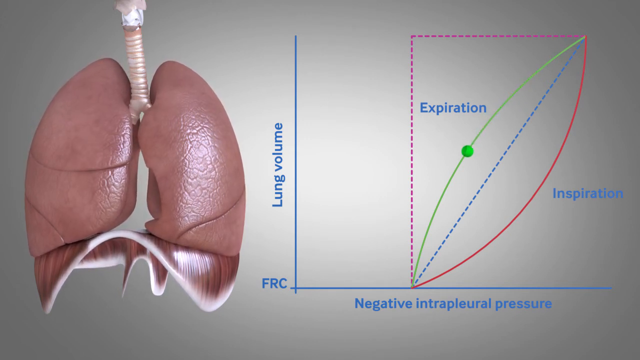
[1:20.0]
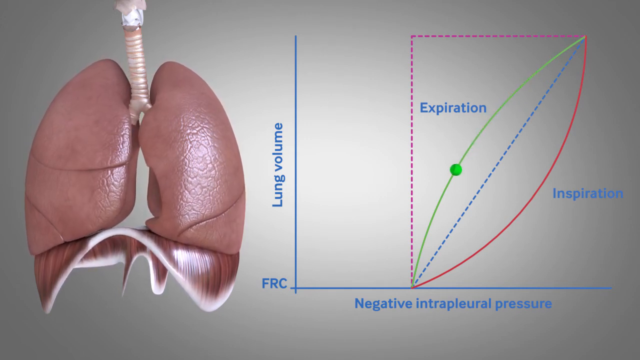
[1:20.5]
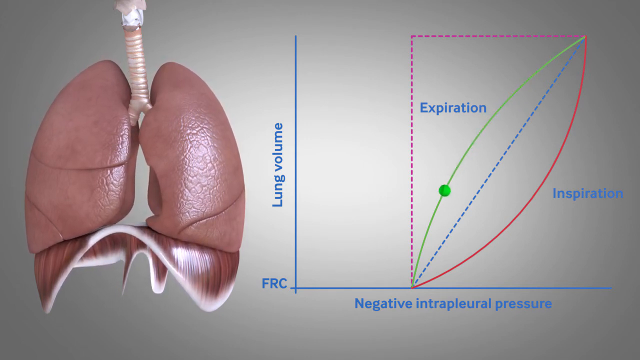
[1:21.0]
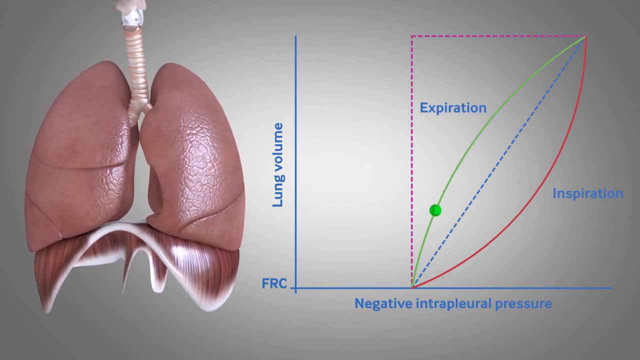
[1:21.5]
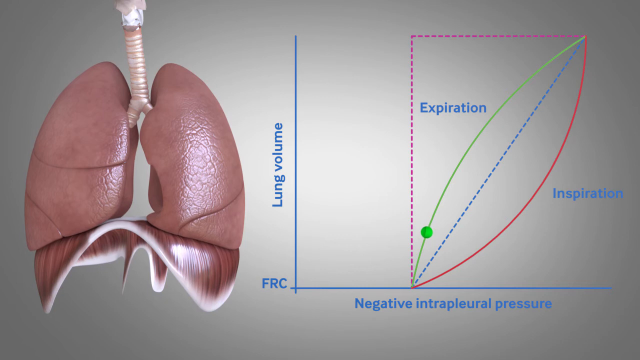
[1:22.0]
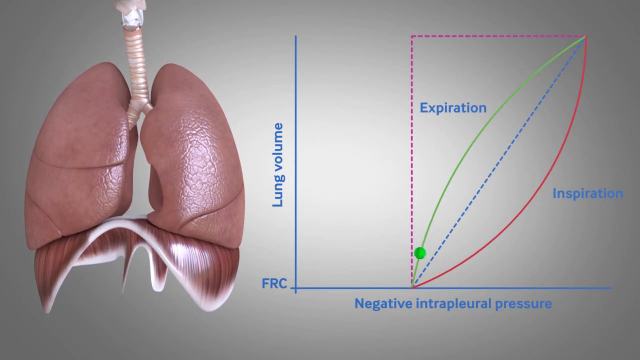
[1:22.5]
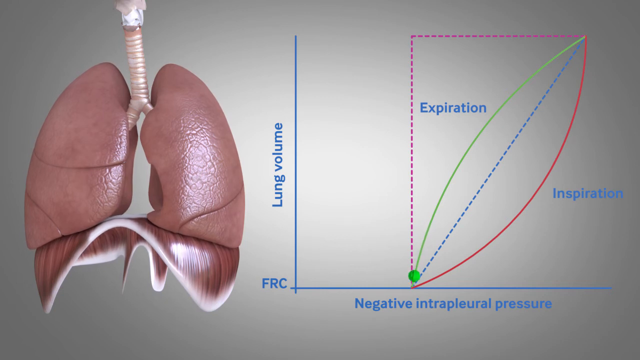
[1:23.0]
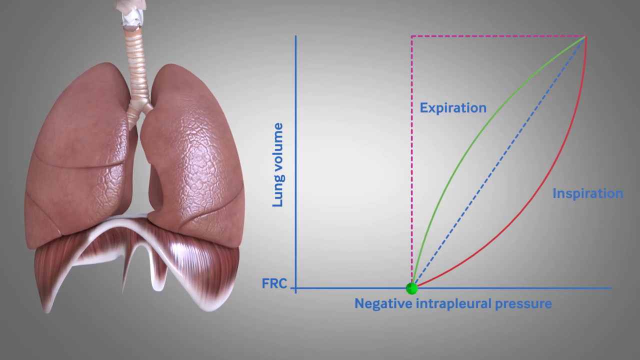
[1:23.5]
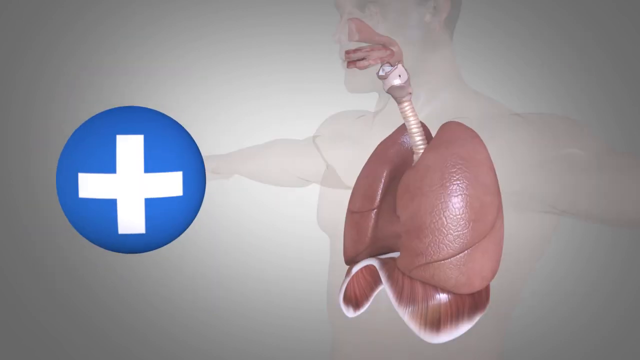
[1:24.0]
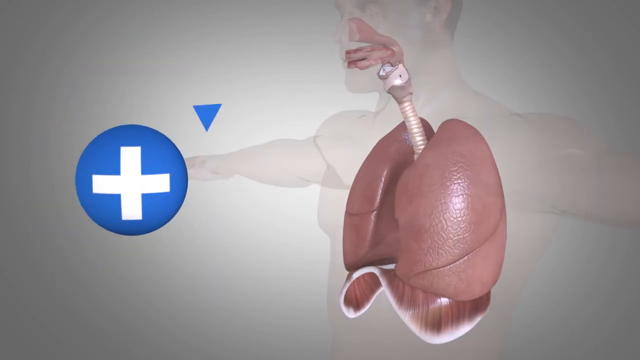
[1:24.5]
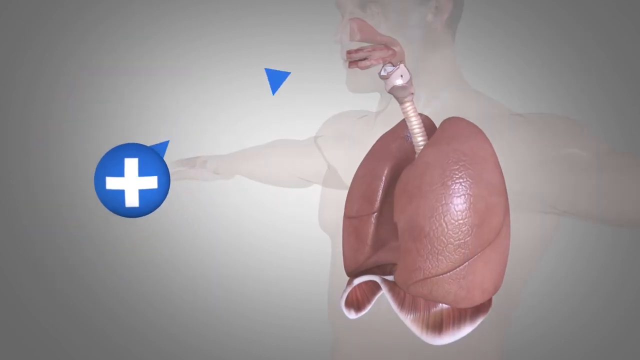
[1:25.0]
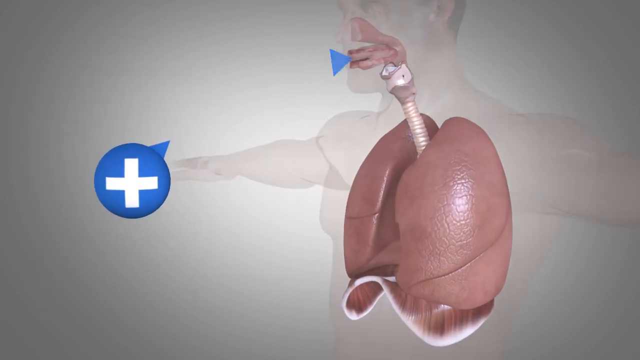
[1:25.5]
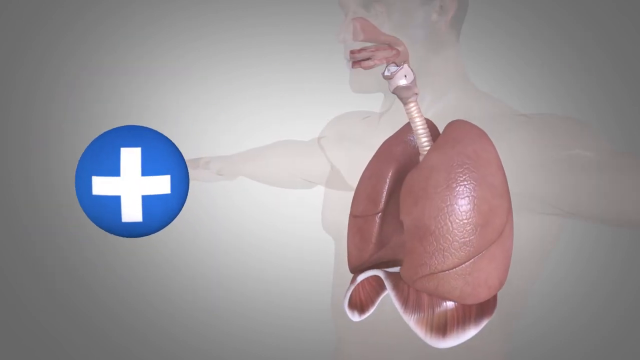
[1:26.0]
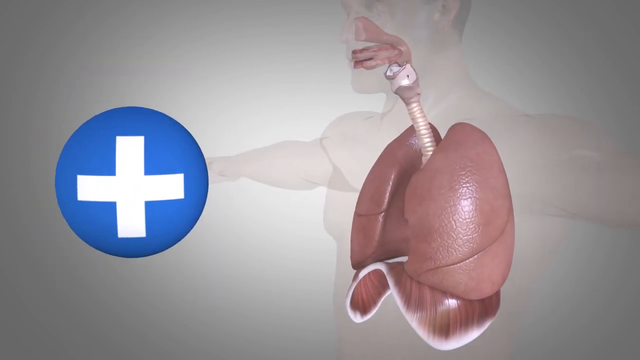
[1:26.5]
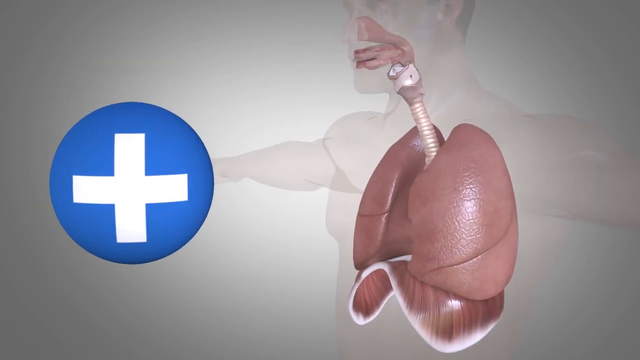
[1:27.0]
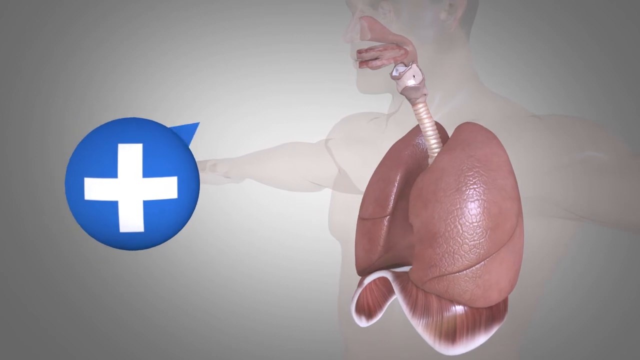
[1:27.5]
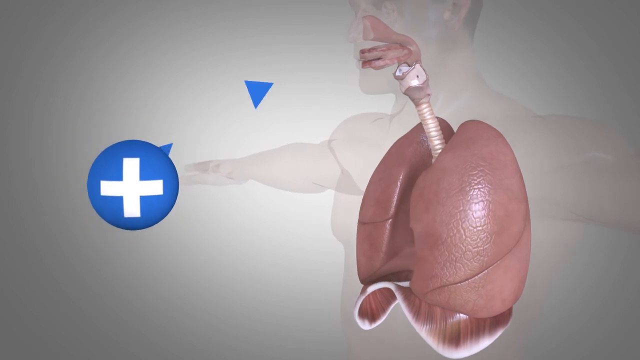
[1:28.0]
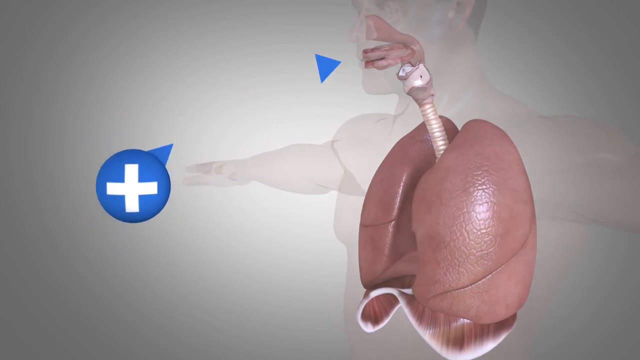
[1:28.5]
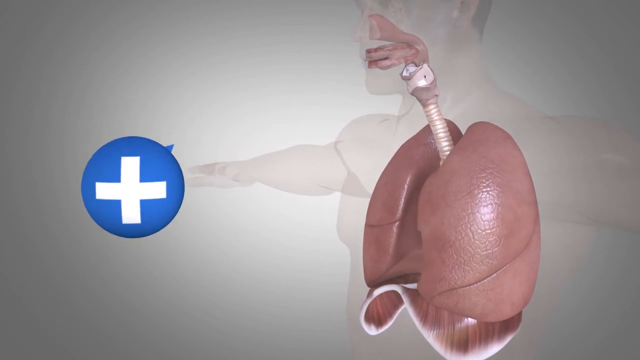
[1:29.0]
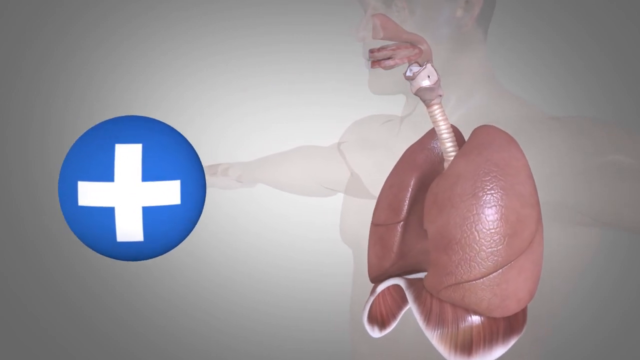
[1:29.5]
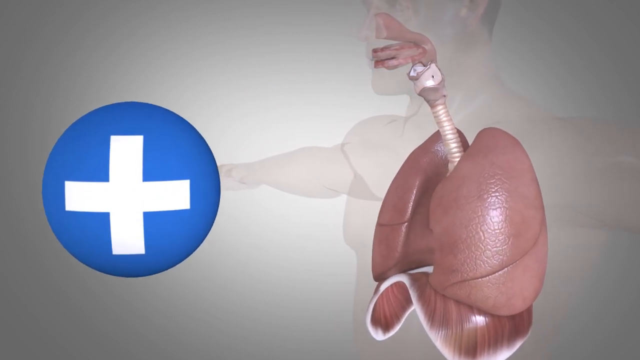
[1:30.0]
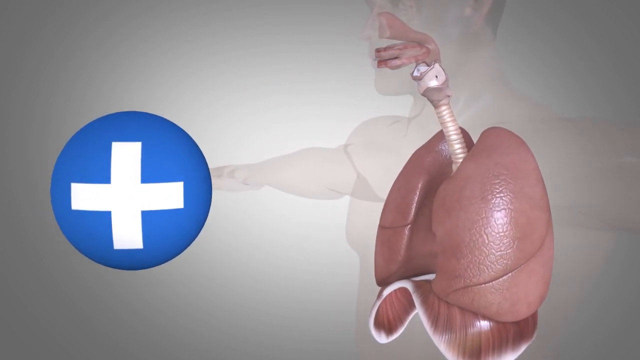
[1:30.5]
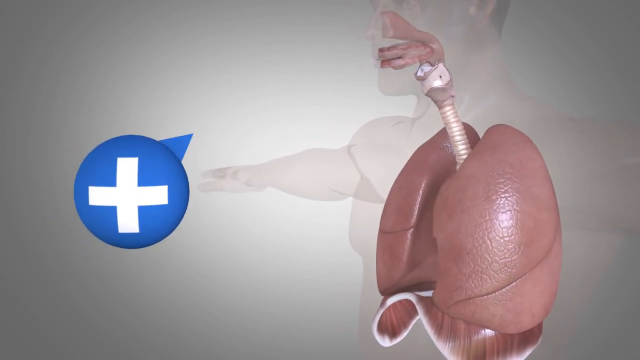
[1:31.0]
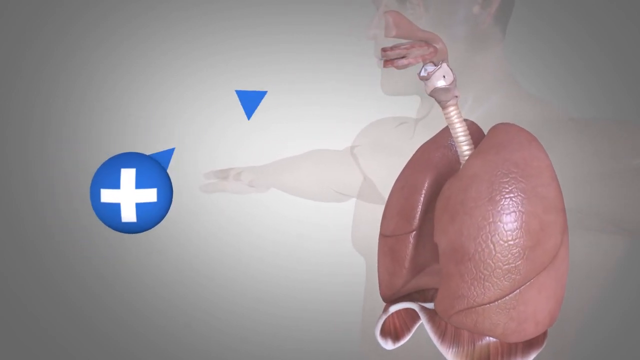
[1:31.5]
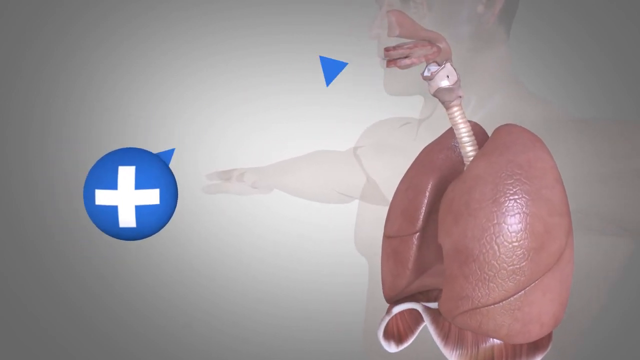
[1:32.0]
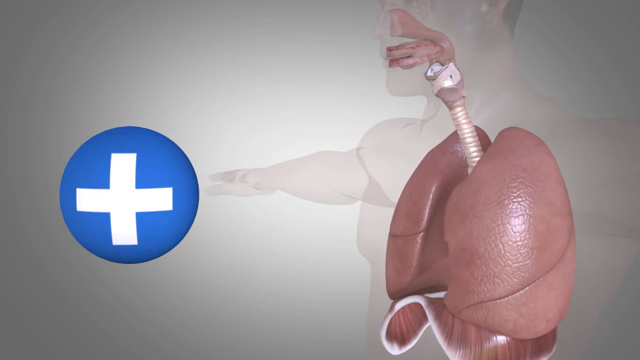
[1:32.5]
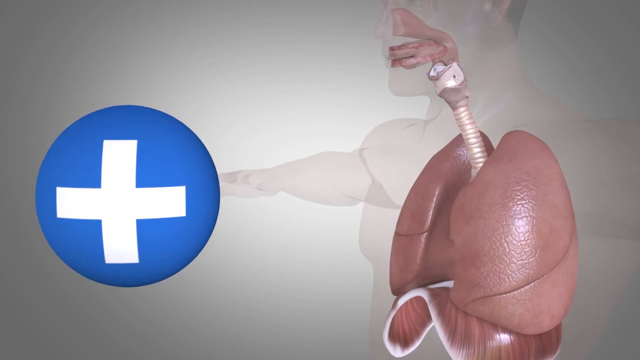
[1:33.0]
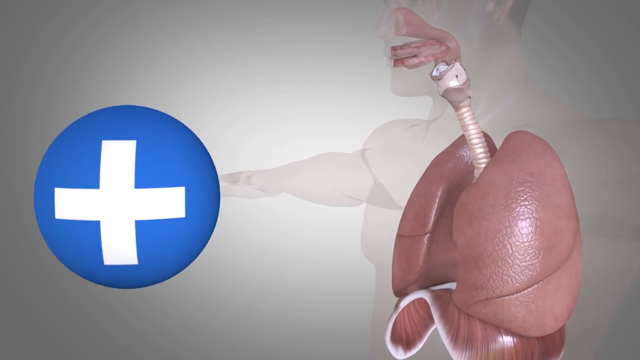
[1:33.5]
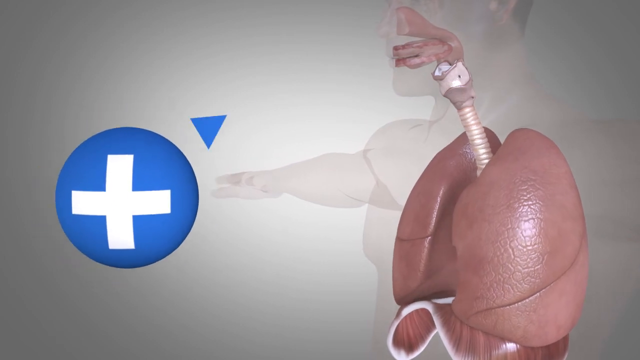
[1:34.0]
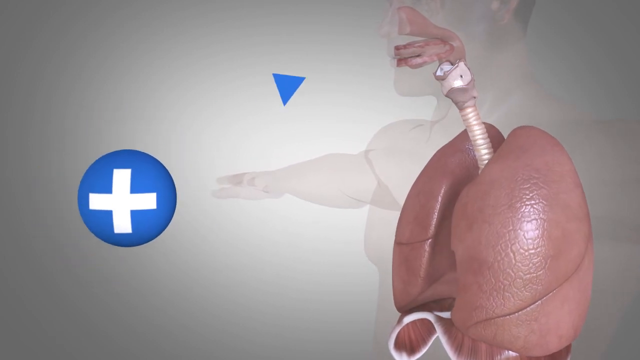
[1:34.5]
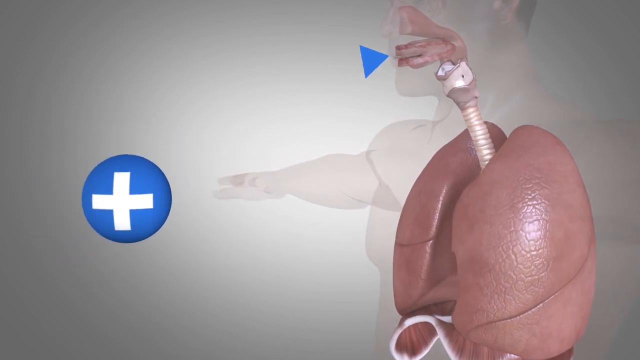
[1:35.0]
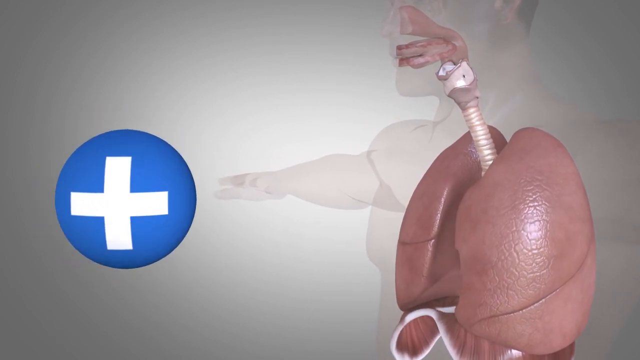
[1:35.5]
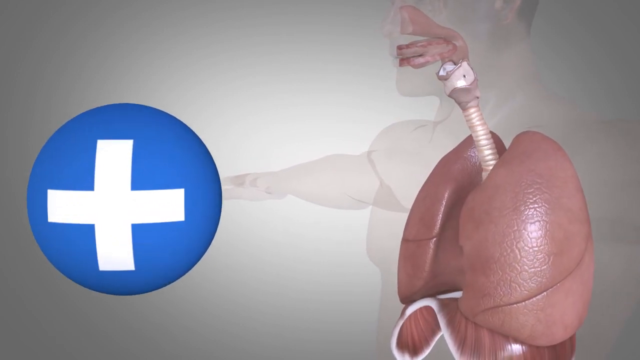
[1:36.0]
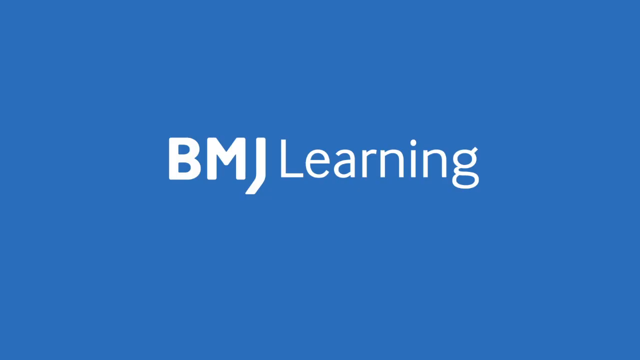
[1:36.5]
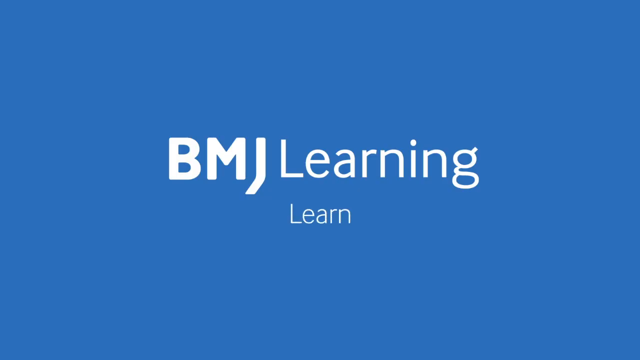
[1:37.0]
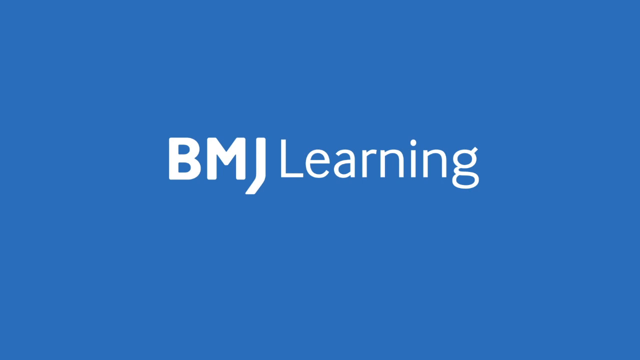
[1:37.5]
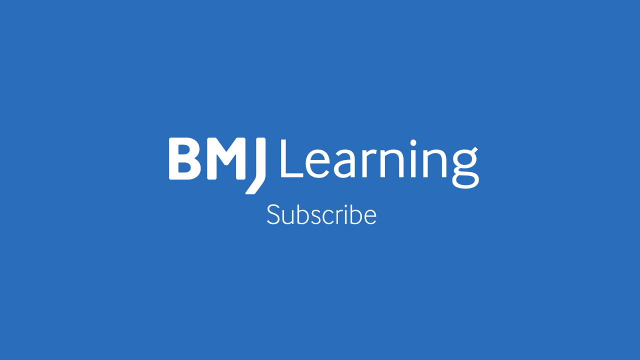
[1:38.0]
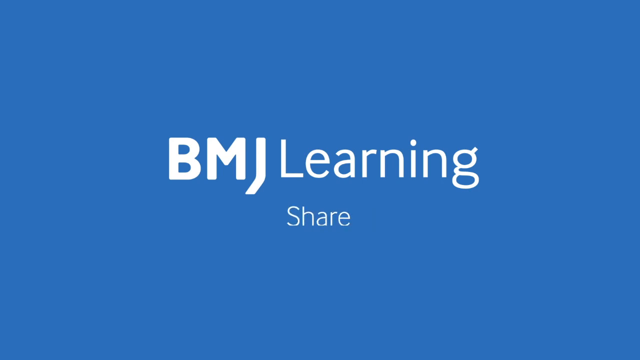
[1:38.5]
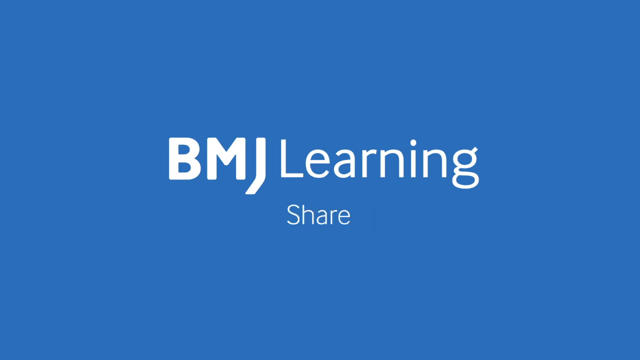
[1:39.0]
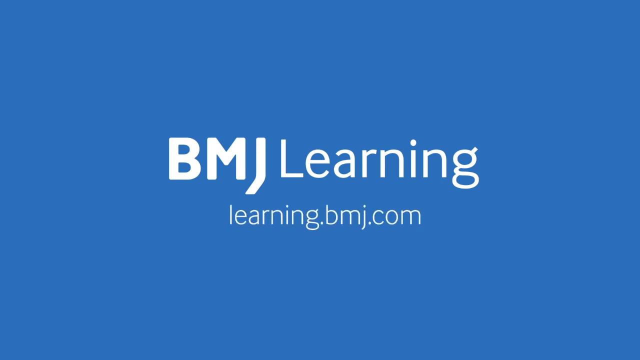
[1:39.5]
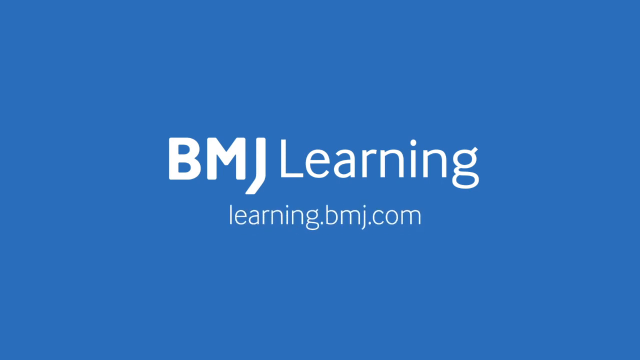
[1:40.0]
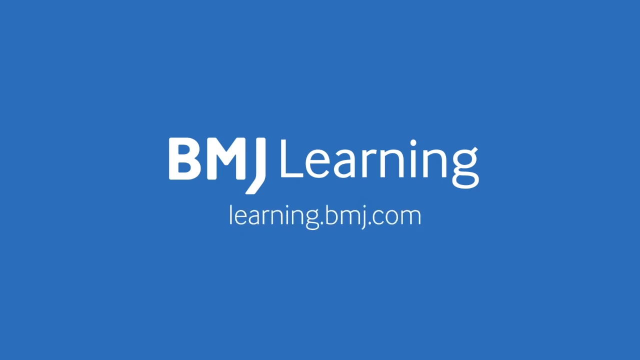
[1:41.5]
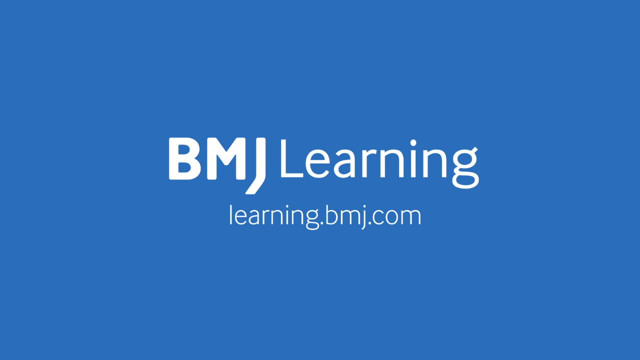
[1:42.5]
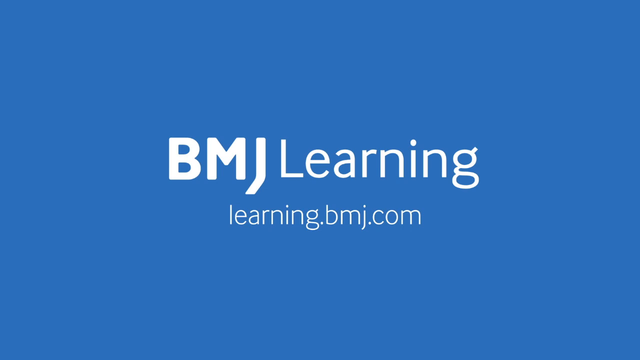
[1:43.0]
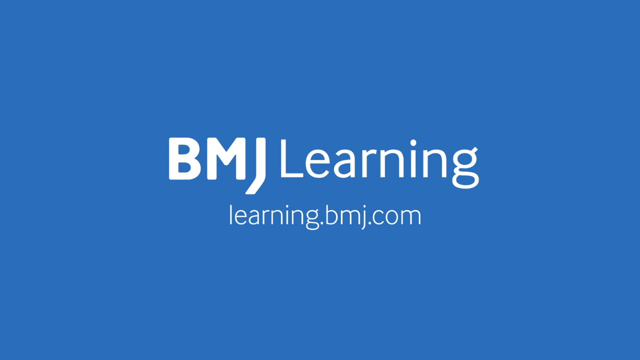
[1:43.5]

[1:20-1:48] A demonstration of human lungs and how they work. A CGI graphic of lungs is on the left side; they are pink, with a white windpipe descending from above and branching into each lung. The lungs are sitting atop the diaphragm, depicted as a shiny flat pink surface with edges that curve down into points. On the right is a chart with the x-axis labeled "Negative intrapleural pressure" and the y-axis labeled "Lung volume." Within the chart there is a bent dotted red line that bends to the right and a diagonal dotted blue line that joins it at the bottom and extends upward. A curved solid green line runs from the top of the blue line to the bottom on the left, and a solid red line runs from the bottom of the blue line to the bottom on the right. The green line is labeled "Expiration" and the red line "Inspiration." A green dot moves down the Expiration line. Next, a graphic shows the same lung system on the right, contracting and expanding. On the left side is a small blue circle with a white cross in it, and blue arrows move from it toward the lungs; the blue circle appears to get larger and smaller with each movement of the lungs. The video ends with a title screen that says "BMJLearning." The word "Learn" appears underneath and disappears, then the word "Subscribe," which disappears, then the word "Share," and then "learning.bmj.com."